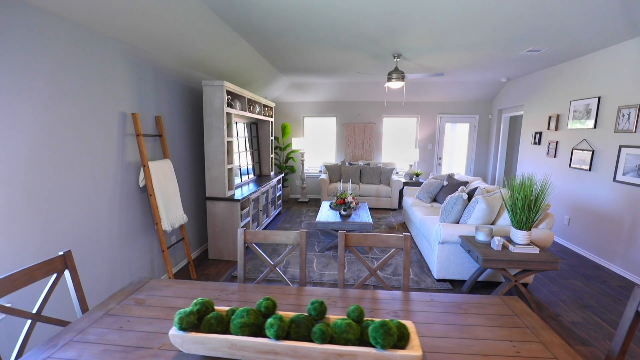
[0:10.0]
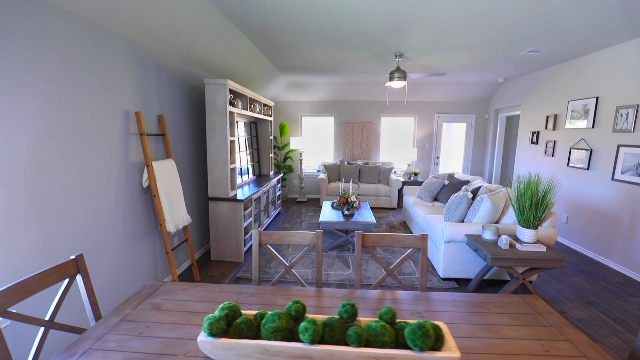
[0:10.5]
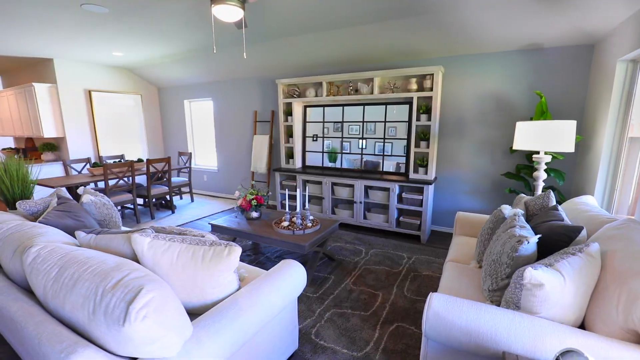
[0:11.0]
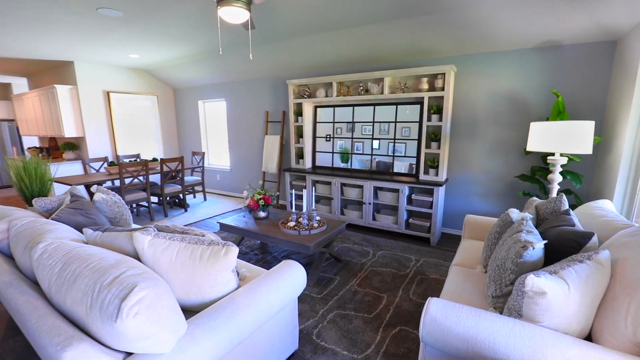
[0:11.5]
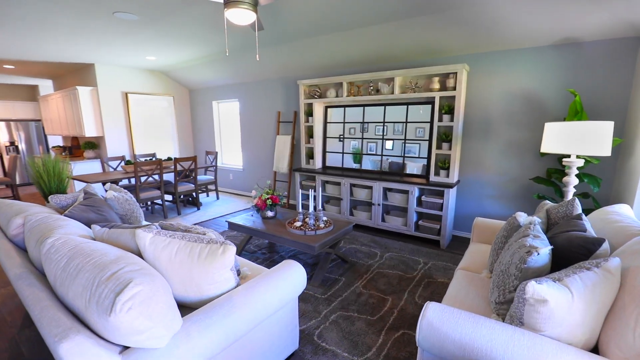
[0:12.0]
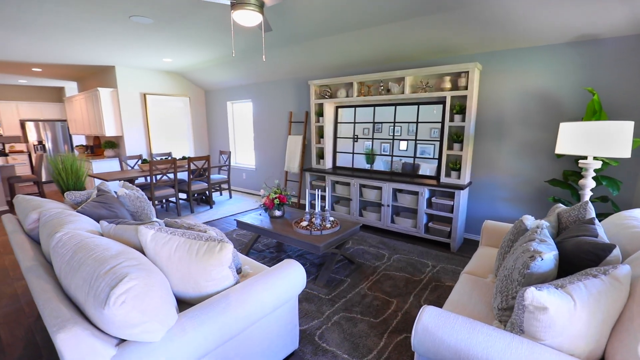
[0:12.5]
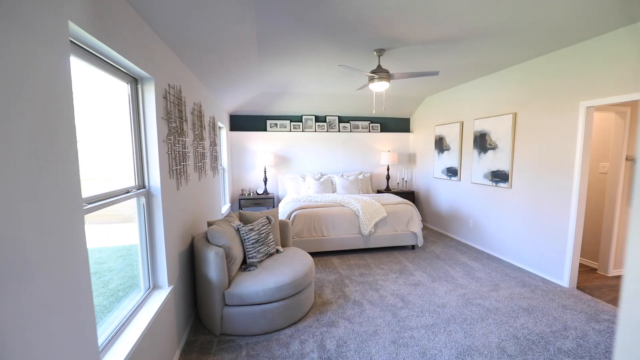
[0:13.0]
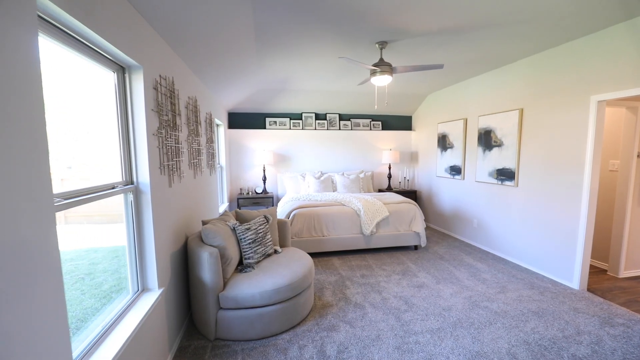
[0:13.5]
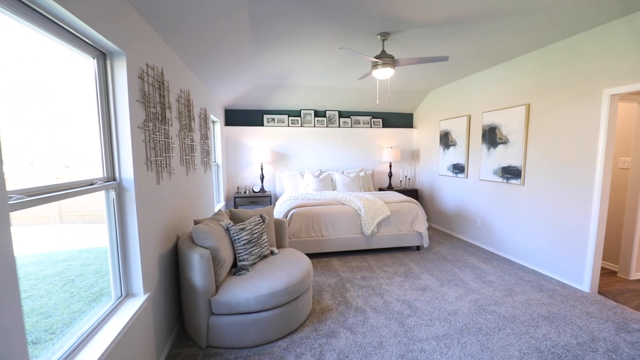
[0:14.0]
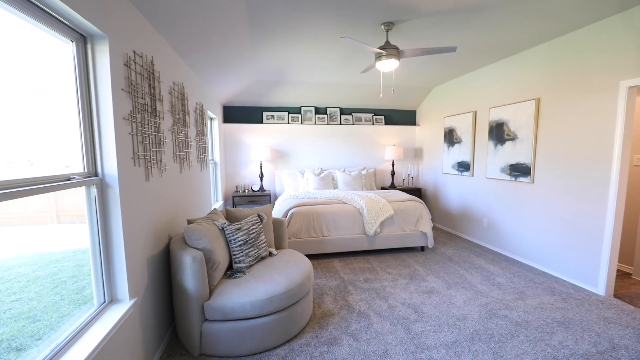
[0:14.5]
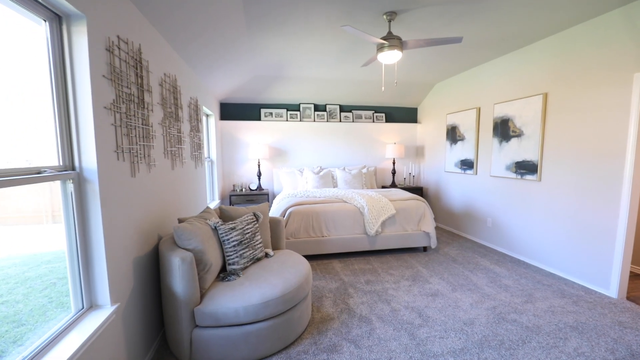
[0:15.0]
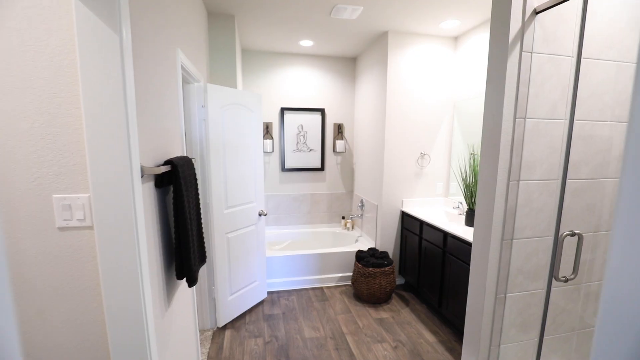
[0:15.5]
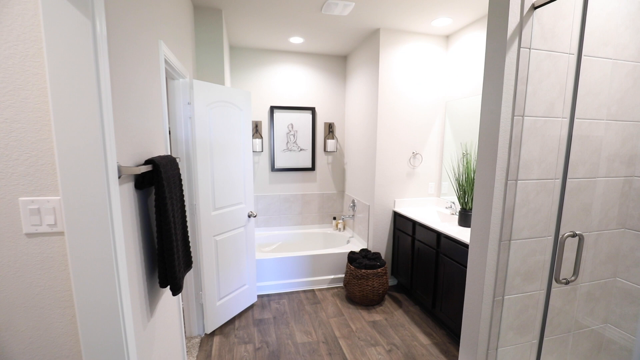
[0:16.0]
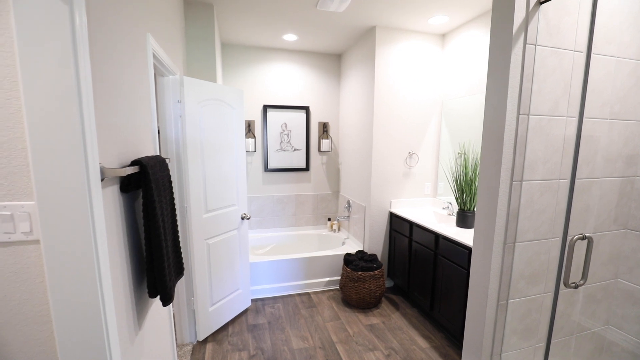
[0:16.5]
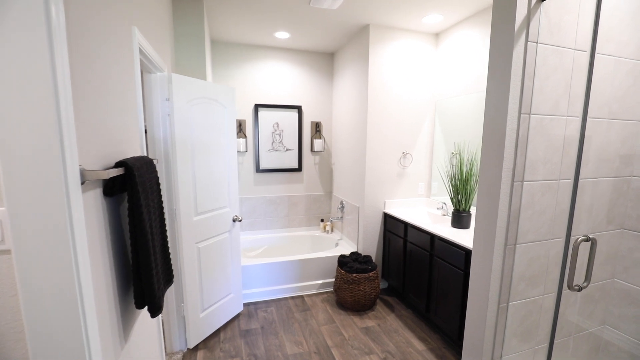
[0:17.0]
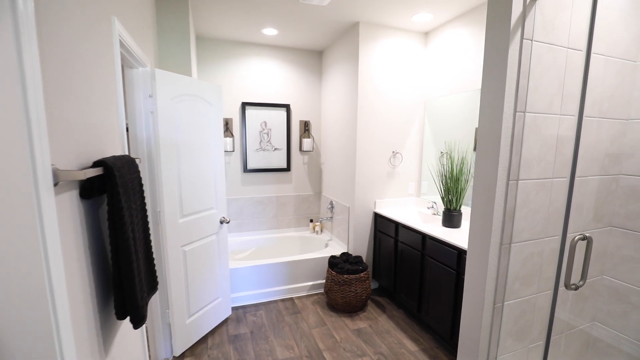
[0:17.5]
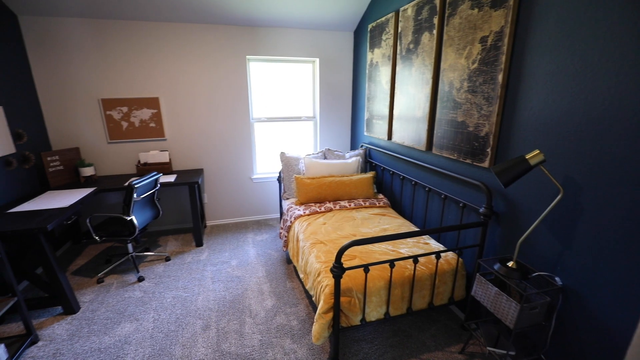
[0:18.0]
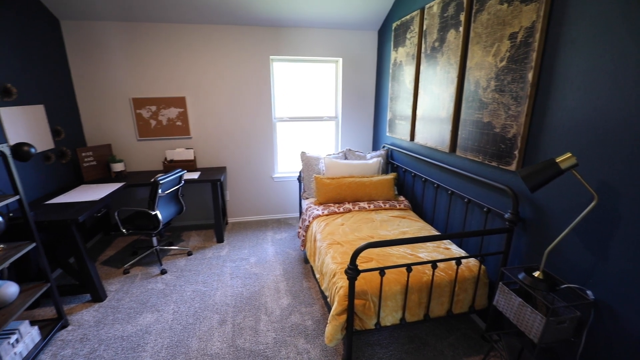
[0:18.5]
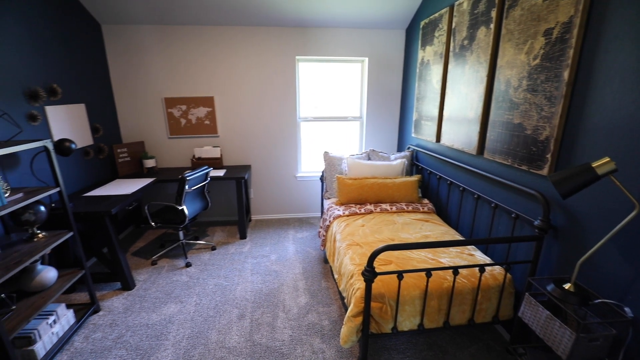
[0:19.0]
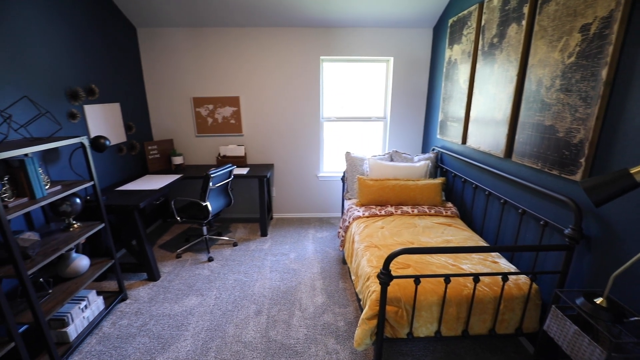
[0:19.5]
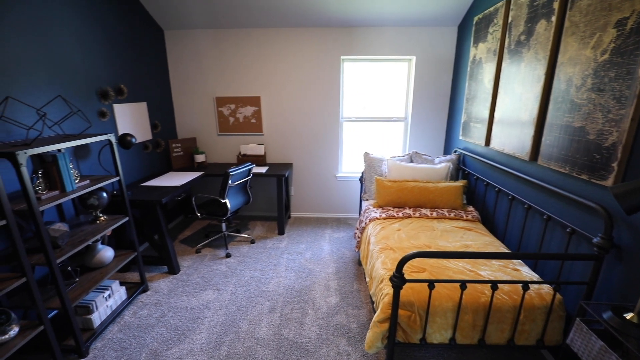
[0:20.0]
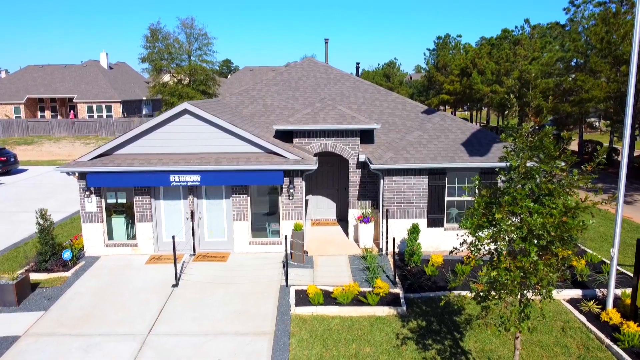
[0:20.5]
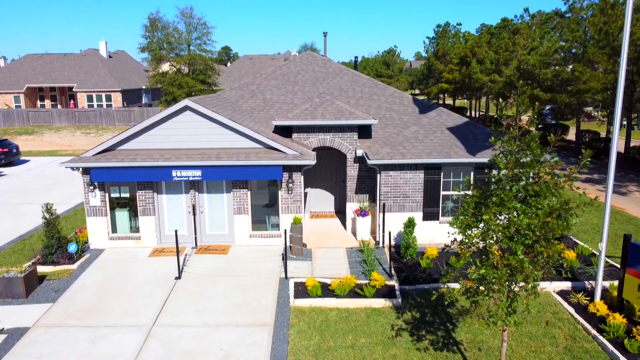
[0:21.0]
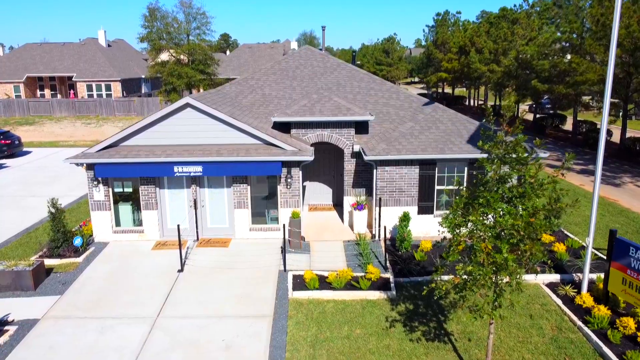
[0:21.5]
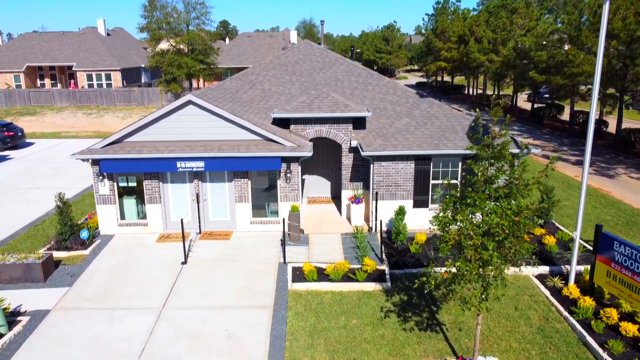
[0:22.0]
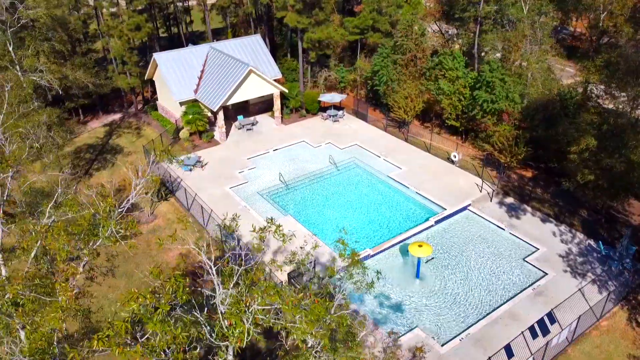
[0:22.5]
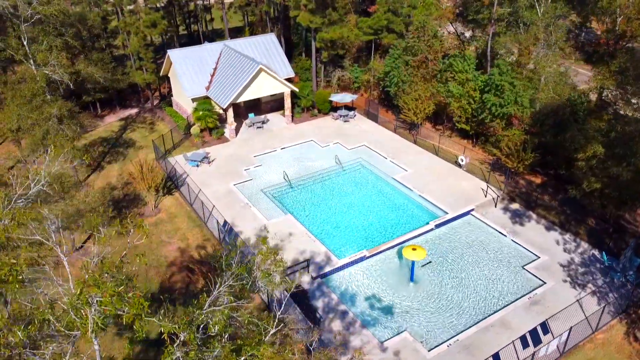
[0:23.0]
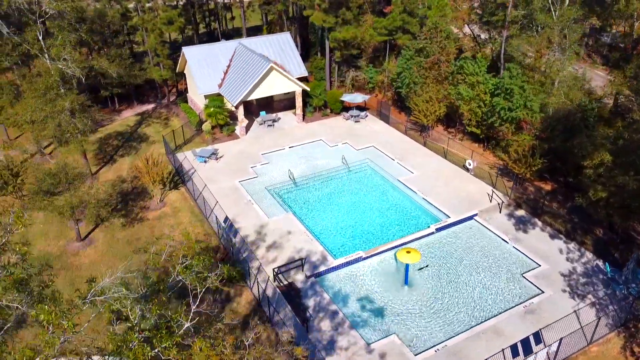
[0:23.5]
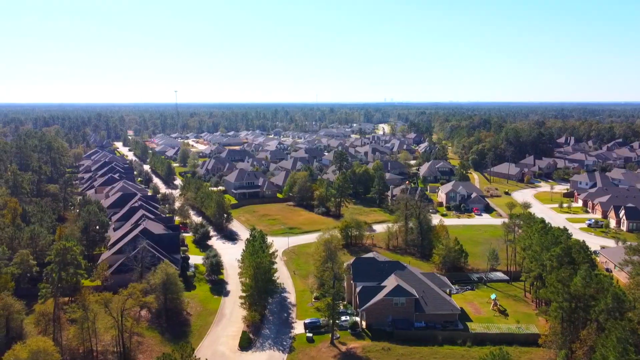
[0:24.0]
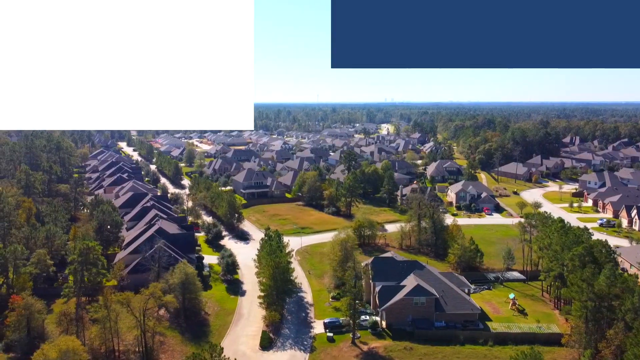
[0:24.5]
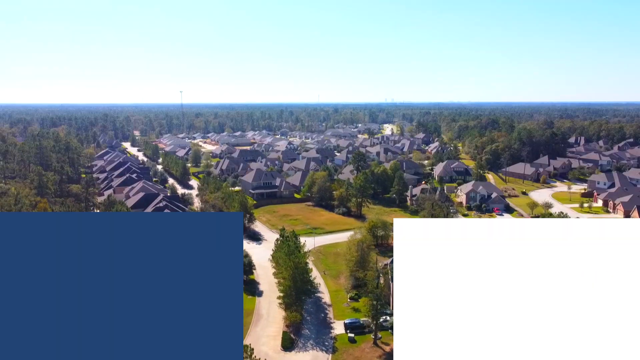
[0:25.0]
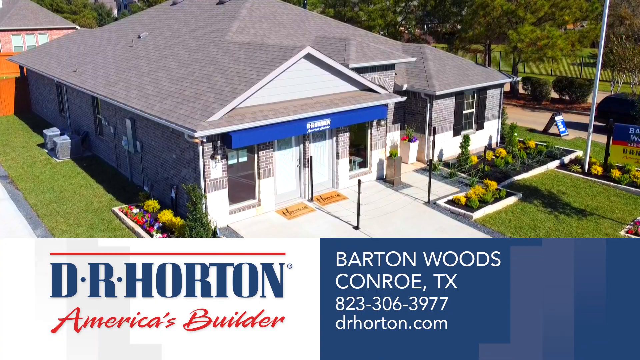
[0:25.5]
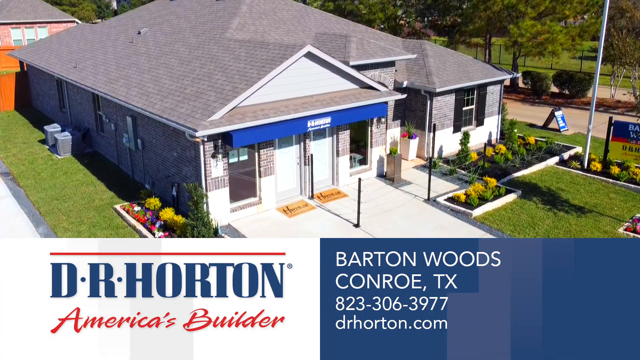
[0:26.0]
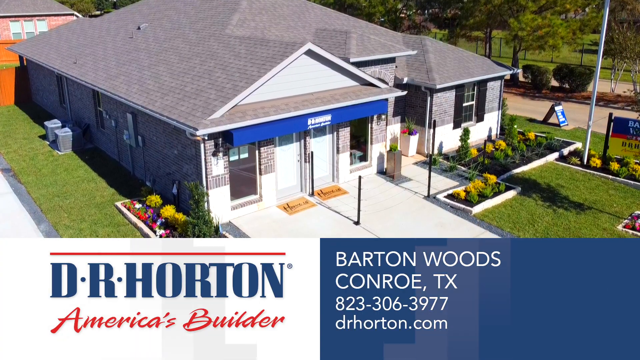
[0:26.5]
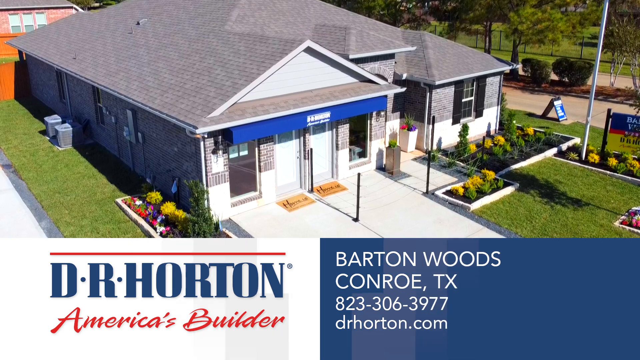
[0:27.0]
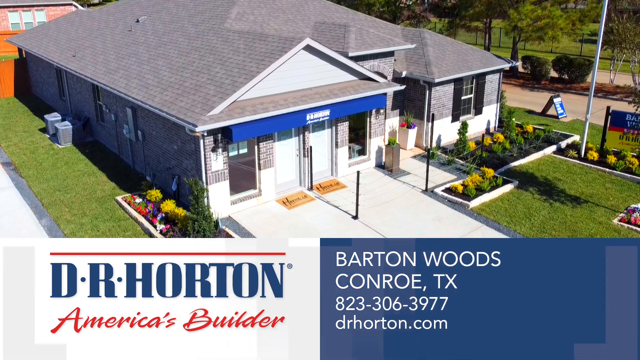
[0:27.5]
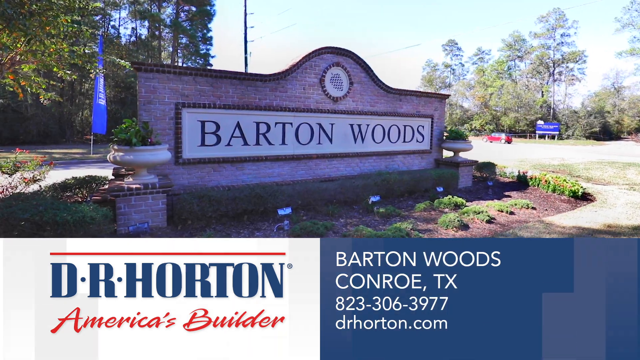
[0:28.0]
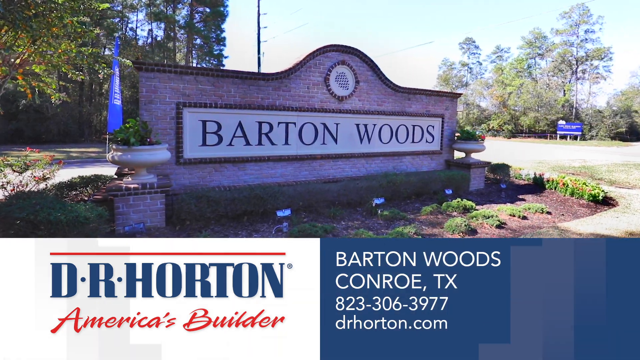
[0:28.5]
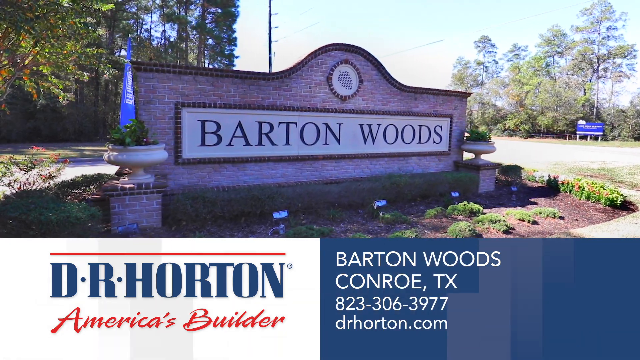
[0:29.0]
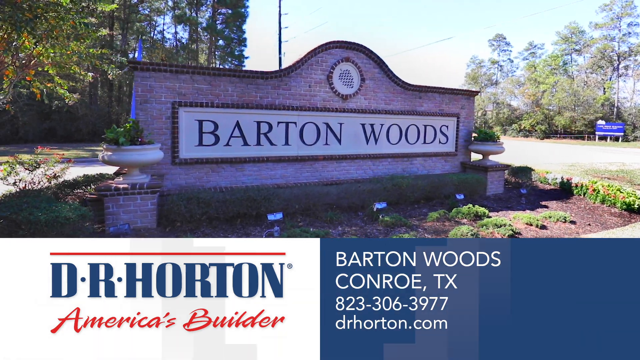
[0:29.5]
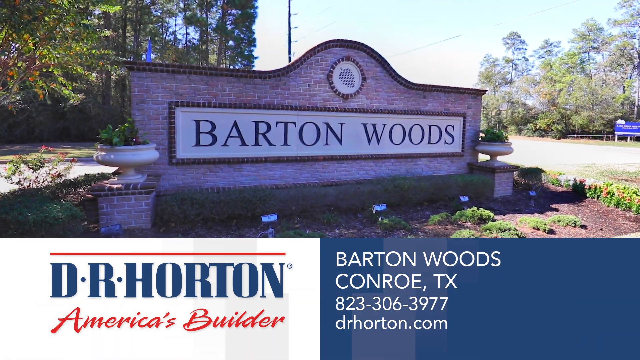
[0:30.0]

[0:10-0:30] The tour of the house for sale continues in the sitting room, which has sofas, a TV and shelves. A dinner table is on the side, with what looks like brown branches on it. The sofas and pillows are gray, there is a small table with a mat, and painted pictures are displayed on the walls. Next is the bedroom, with a bed and a decorated interior; the walls are covered in paint designs, there is a gray sofa inside, and a window lets in light. The bathroom follows, with bathtubs, toilets and sinks. Then a room with a single bed and a study area is shown, which looks like a teenager's room. The outside of the house shows swimming pools, and the video then shows that it is a Brampton Woods estate.